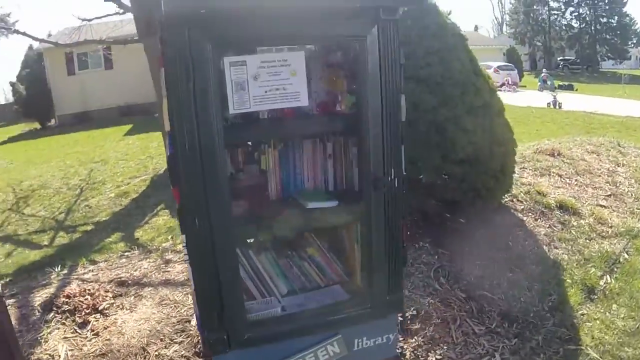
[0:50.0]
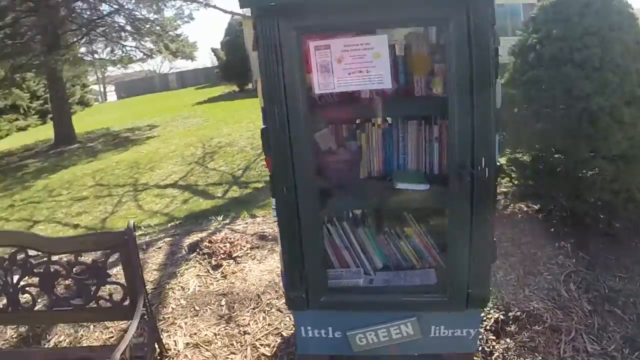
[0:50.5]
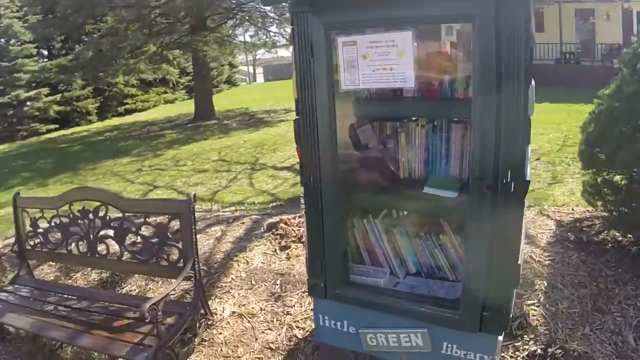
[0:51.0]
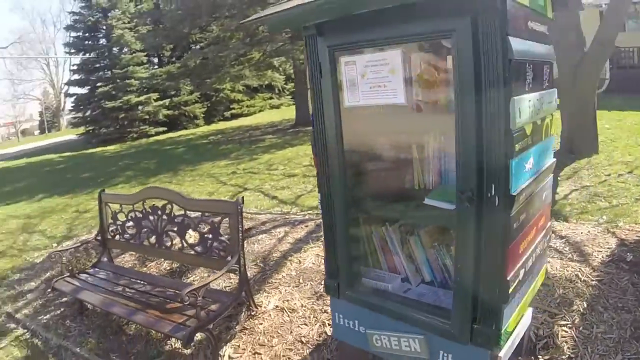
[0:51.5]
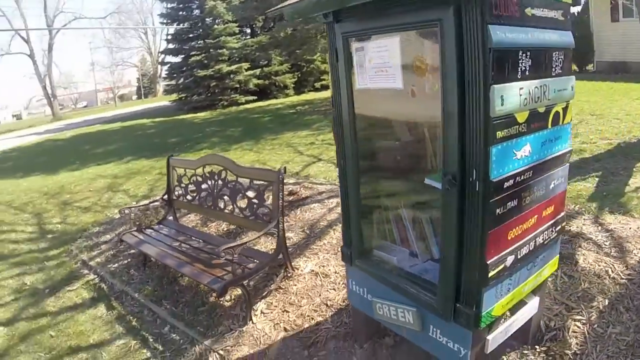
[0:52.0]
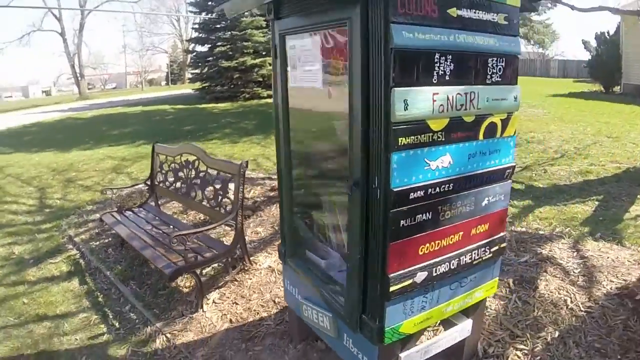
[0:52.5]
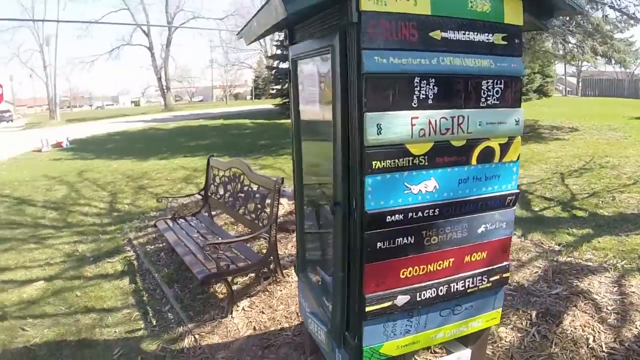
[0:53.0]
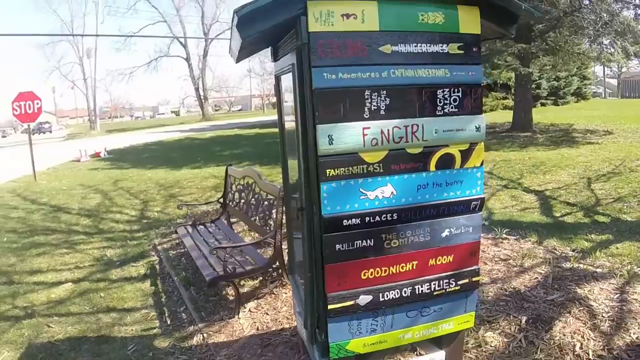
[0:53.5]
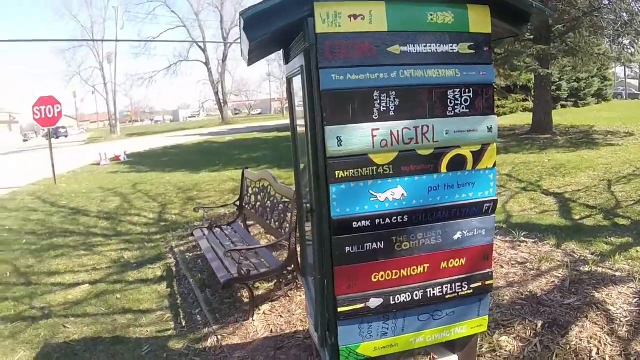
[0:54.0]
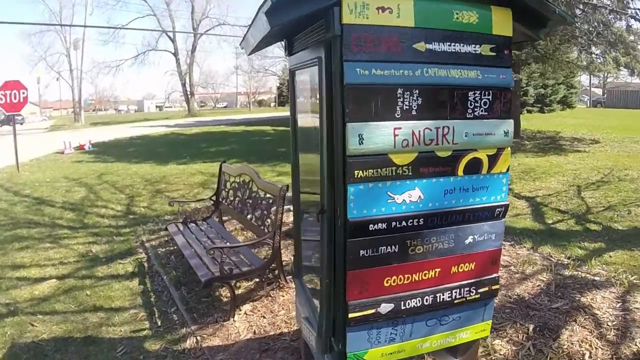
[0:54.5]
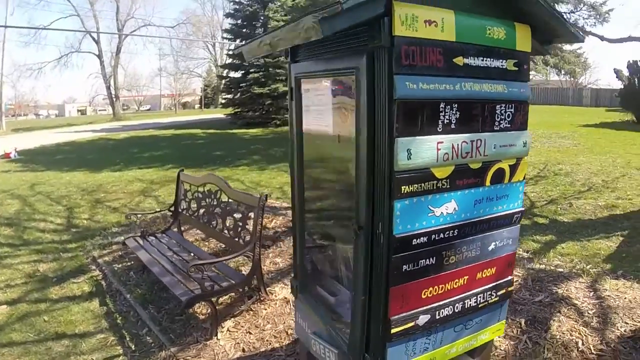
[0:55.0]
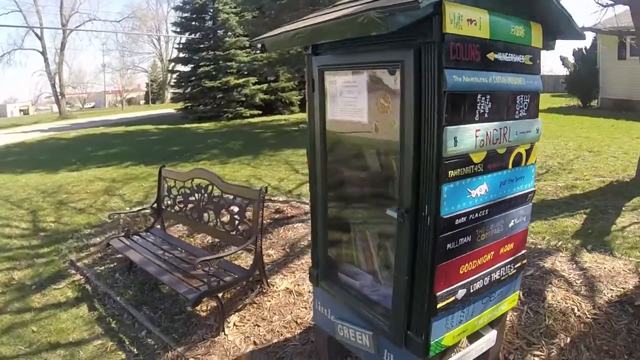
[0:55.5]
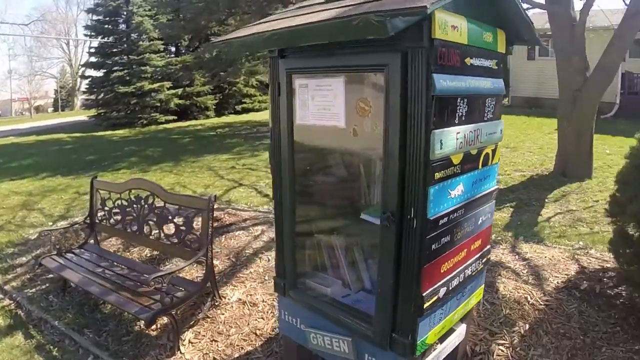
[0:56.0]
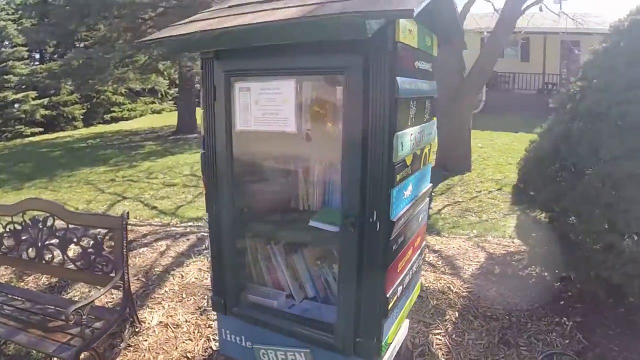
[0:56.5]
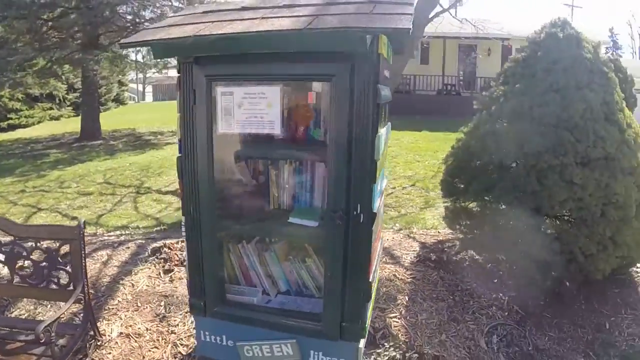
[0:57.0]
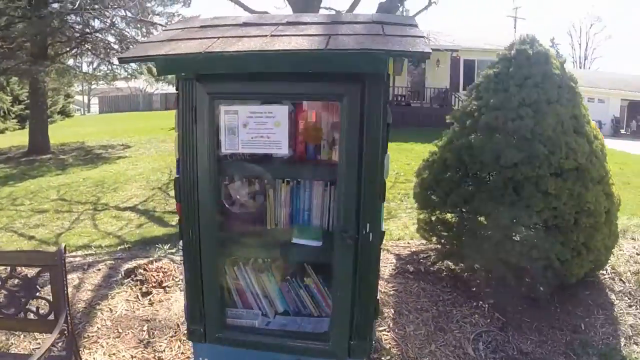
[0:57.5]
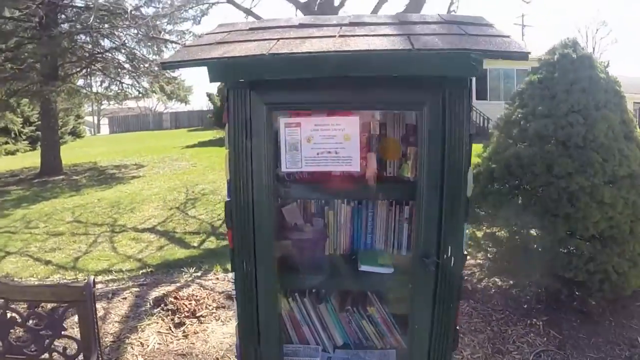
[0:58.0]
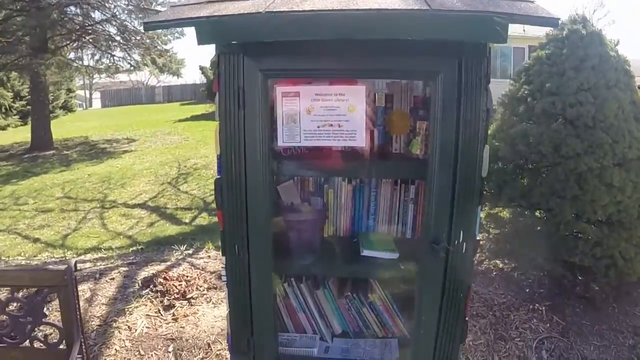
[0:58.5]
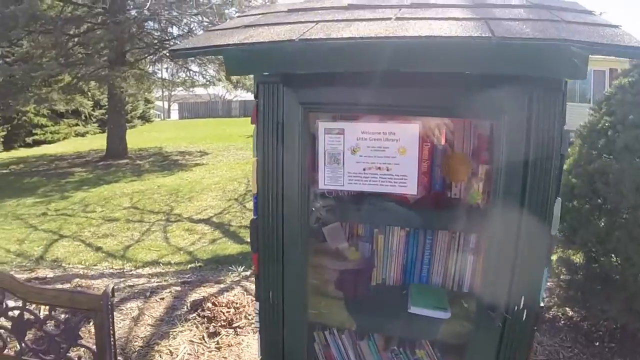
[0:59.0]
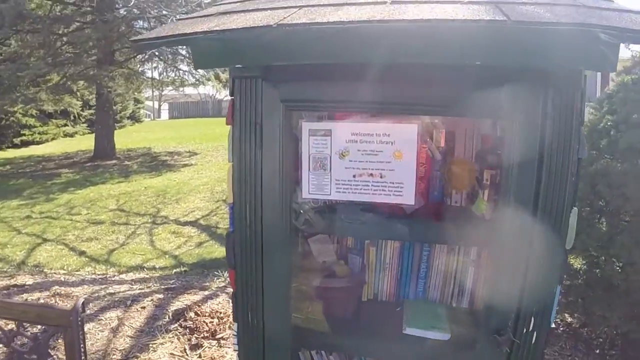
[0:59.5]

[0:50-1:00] The camera pans to the other side of the book nook, revealing that the man was sitting on a bench. When the camera stops, a driveway, his house and a car in the driveway are visible. There is a sign on the glass of the book nook that cannot really be read. The imagery on the sides appears meant to look like books, and the top of the book nook has a little asphalt roofing. The man is no longer in the shot; only the bench he was sitting on remains as the camera pans left to show the right side of the book nook. The street is visible, along with what is apparently a stop sign and a car driving by, suggesting the book nook is on the curb or sidewalk at the front of the yard.